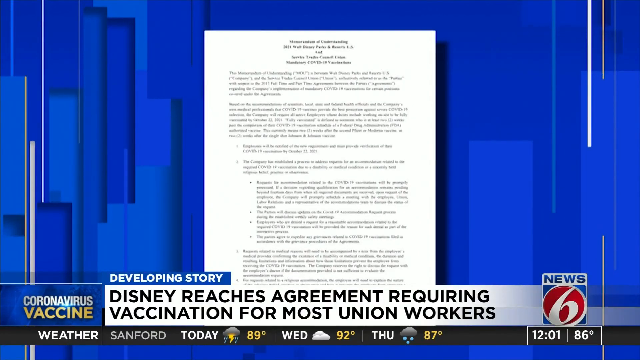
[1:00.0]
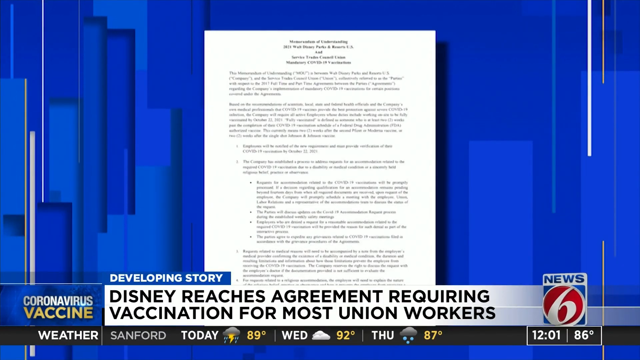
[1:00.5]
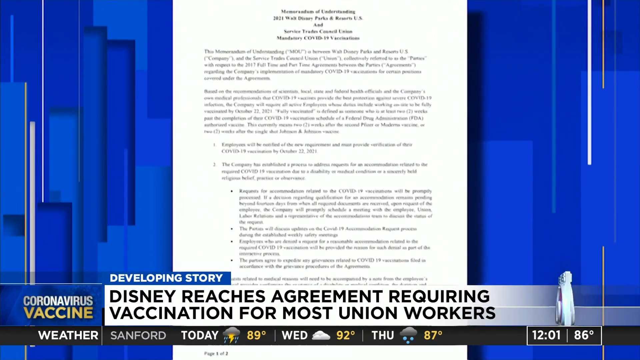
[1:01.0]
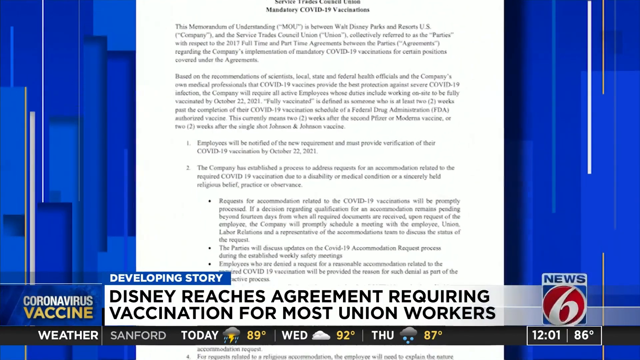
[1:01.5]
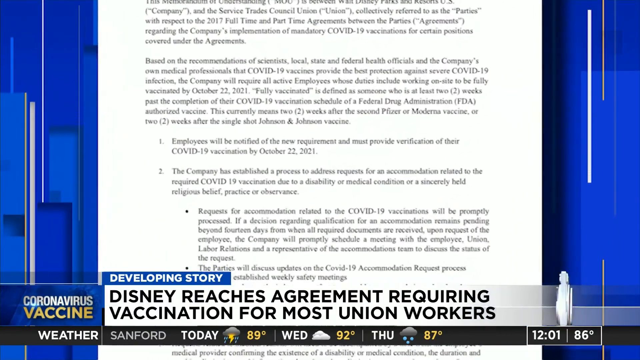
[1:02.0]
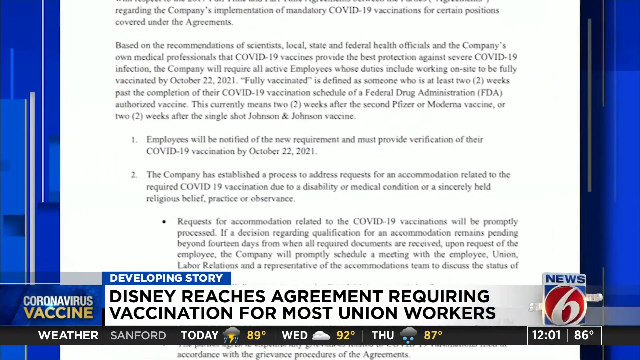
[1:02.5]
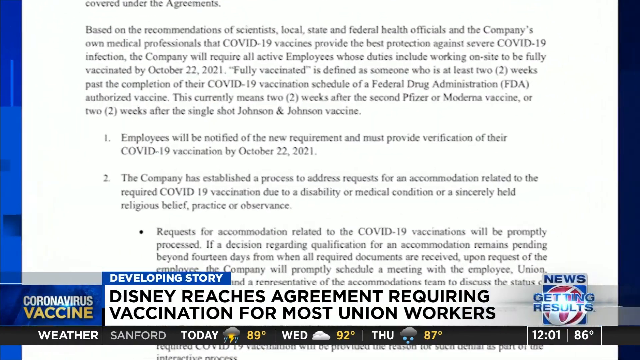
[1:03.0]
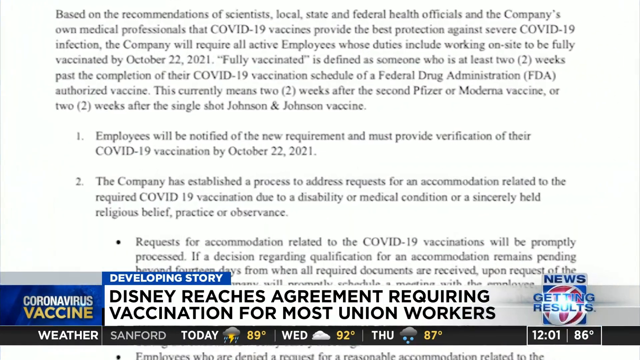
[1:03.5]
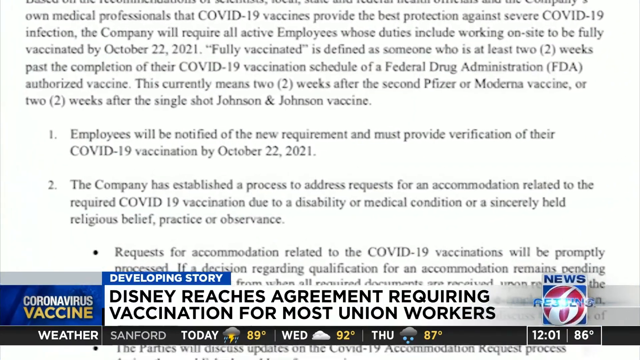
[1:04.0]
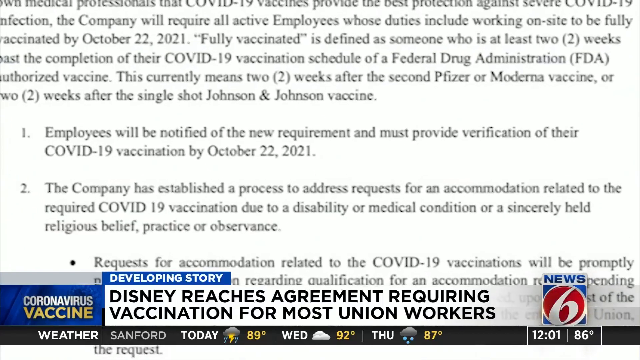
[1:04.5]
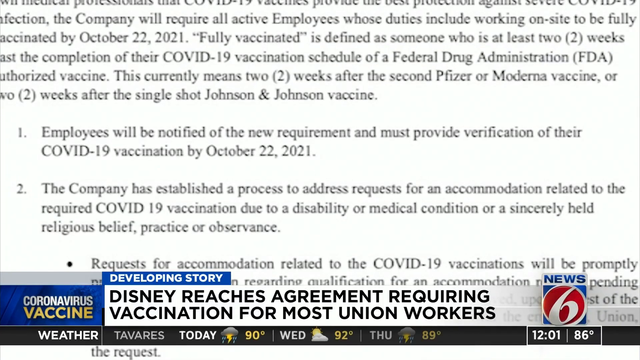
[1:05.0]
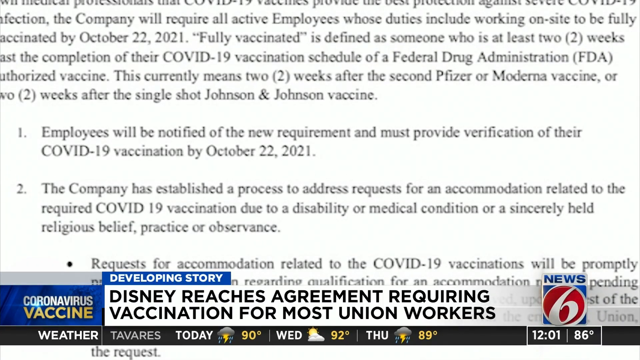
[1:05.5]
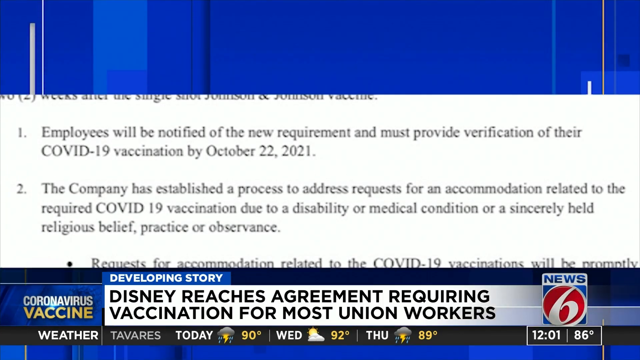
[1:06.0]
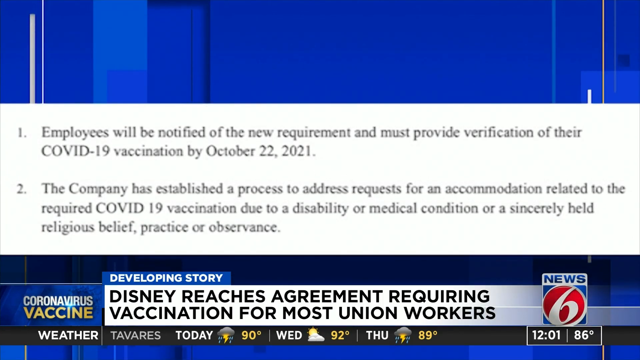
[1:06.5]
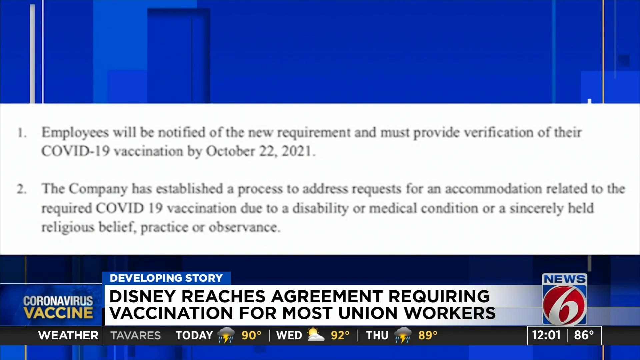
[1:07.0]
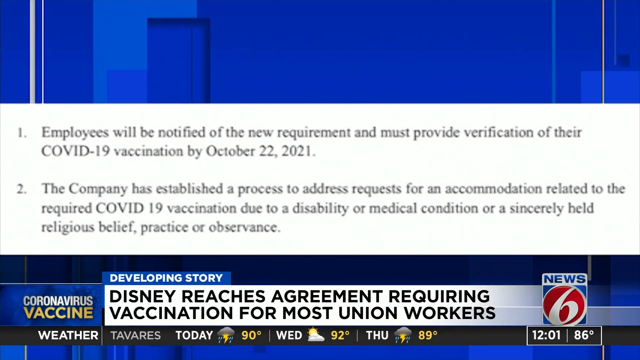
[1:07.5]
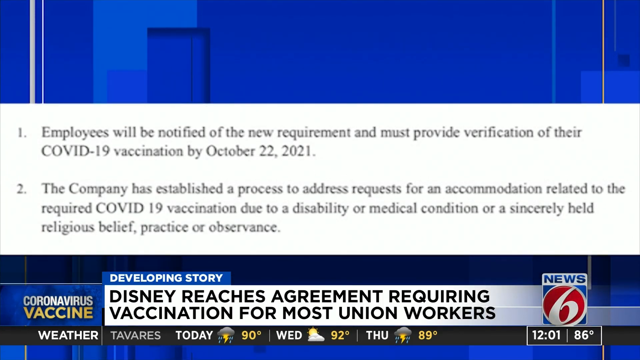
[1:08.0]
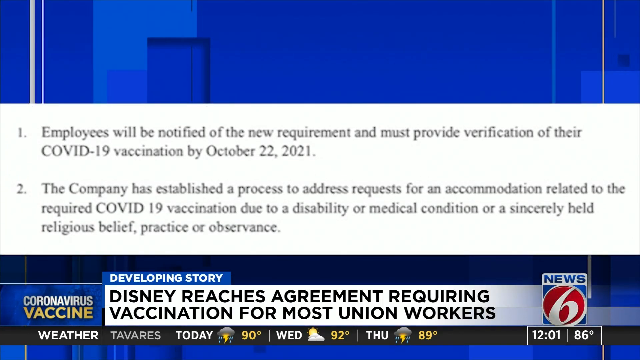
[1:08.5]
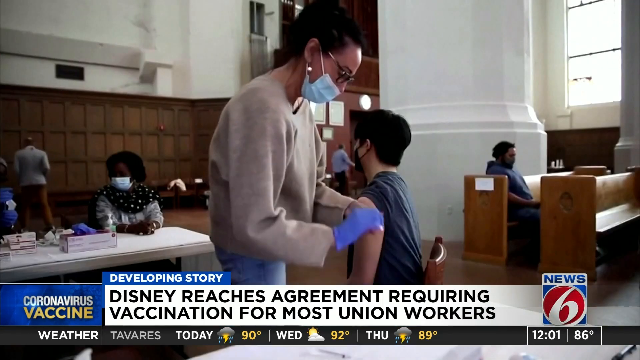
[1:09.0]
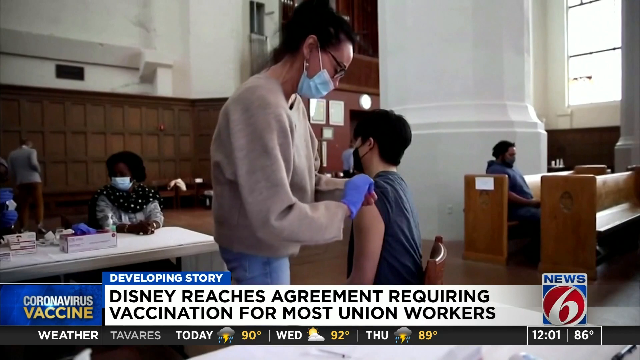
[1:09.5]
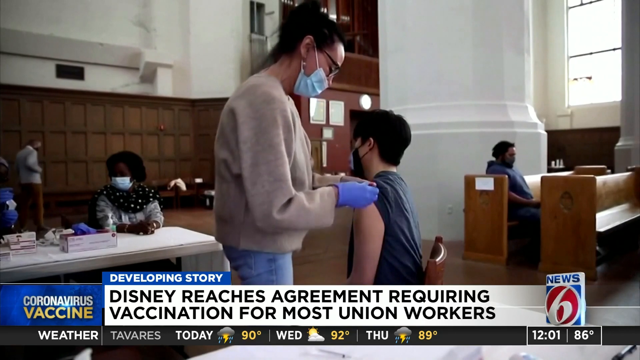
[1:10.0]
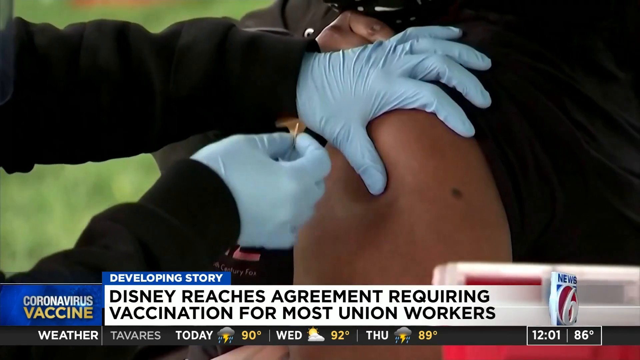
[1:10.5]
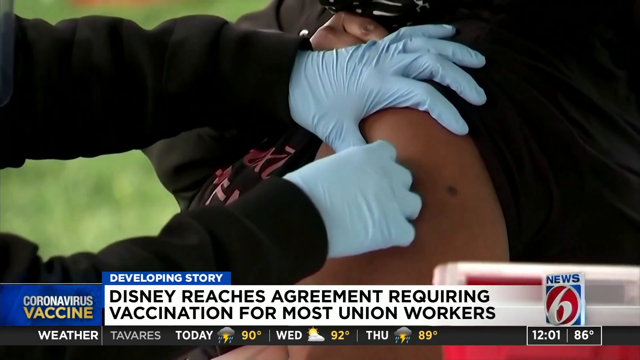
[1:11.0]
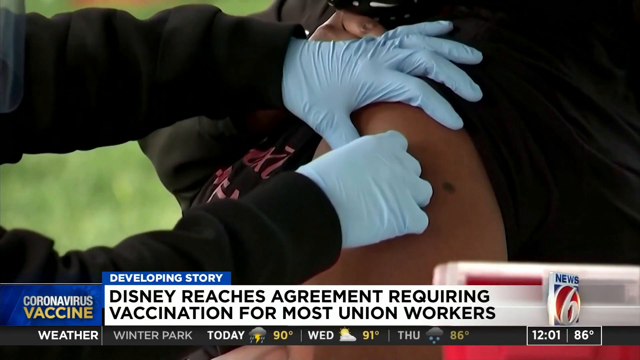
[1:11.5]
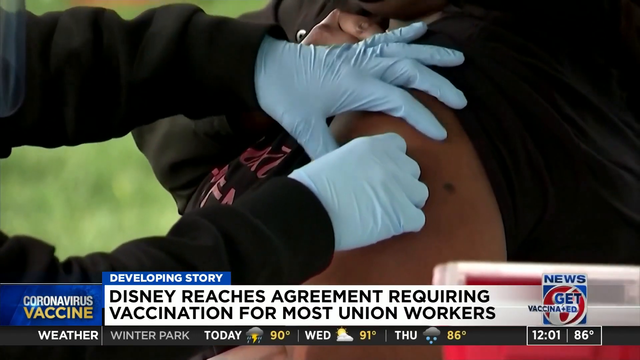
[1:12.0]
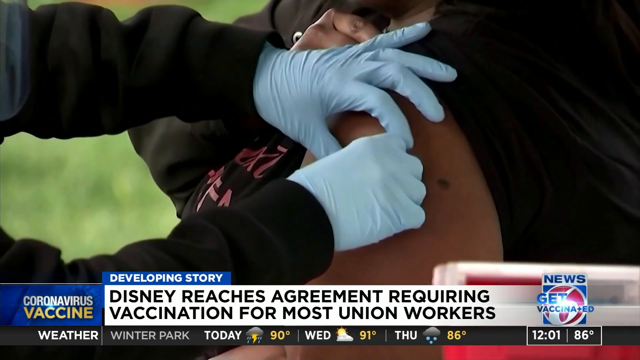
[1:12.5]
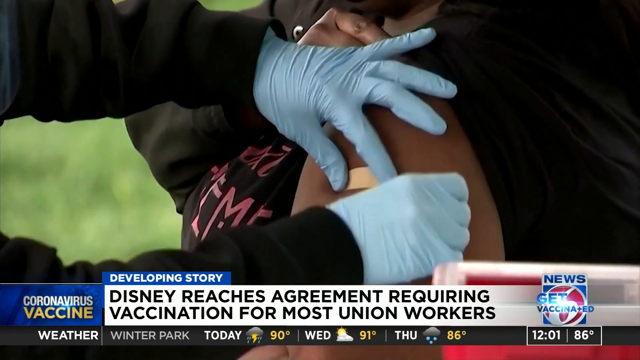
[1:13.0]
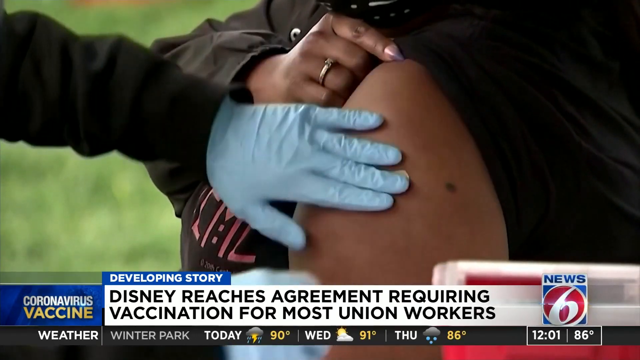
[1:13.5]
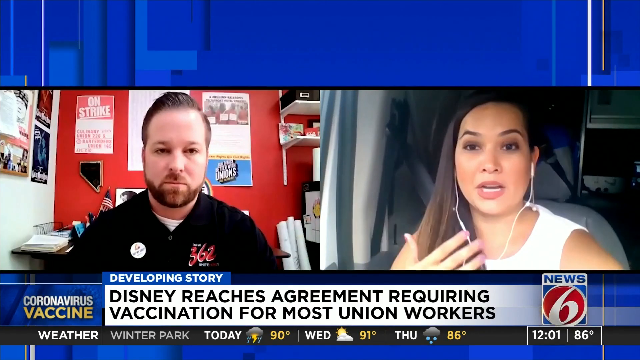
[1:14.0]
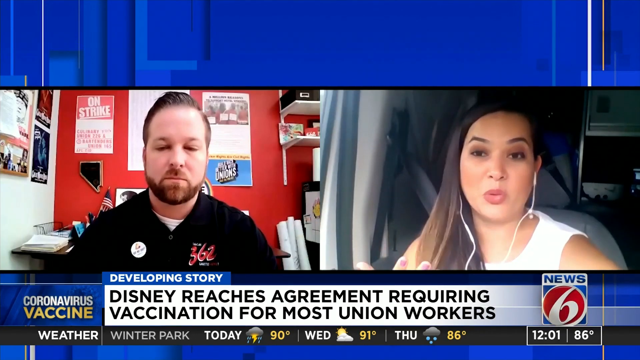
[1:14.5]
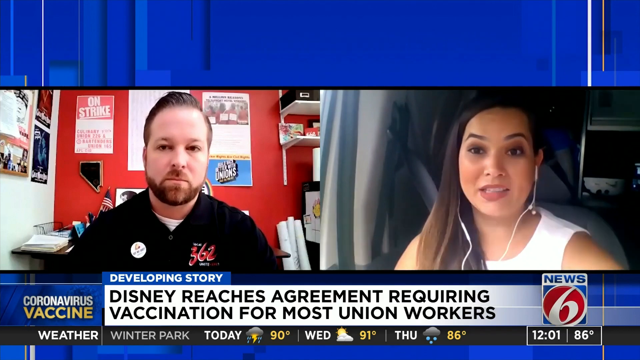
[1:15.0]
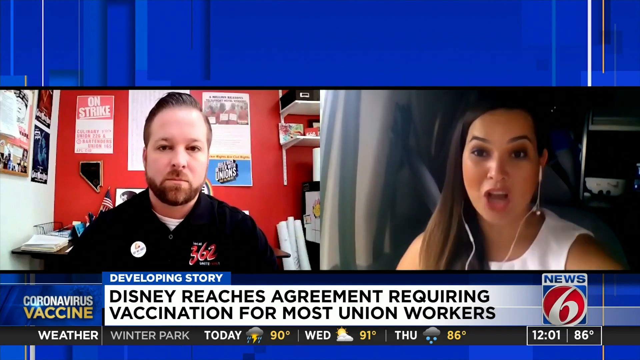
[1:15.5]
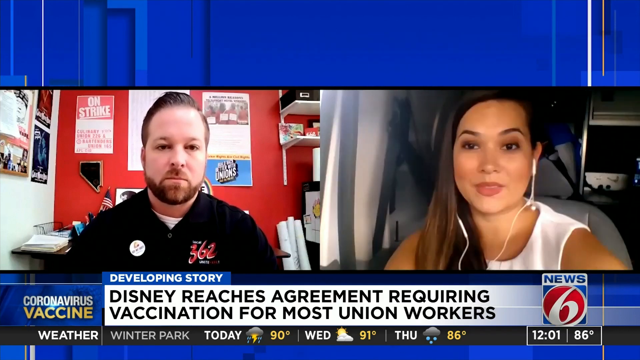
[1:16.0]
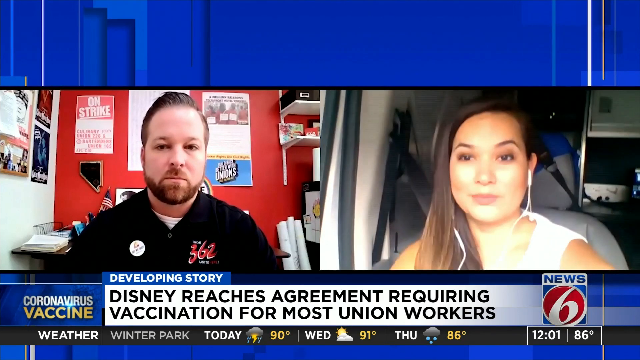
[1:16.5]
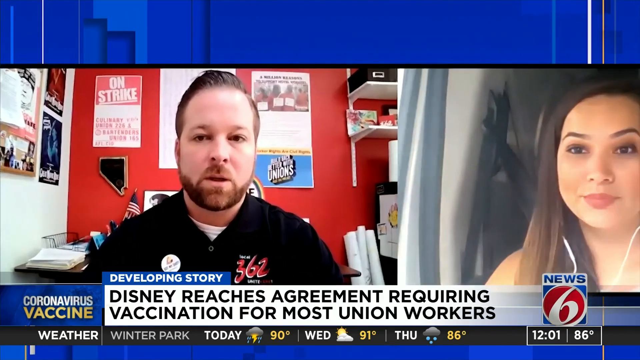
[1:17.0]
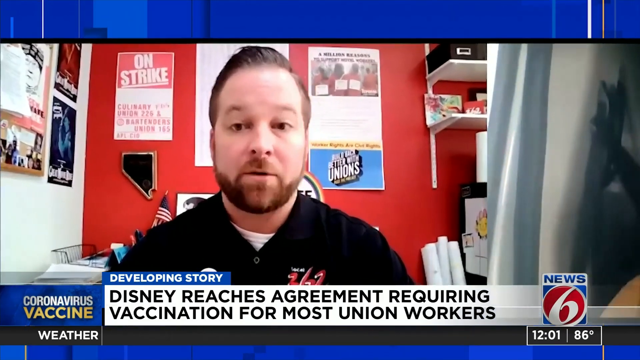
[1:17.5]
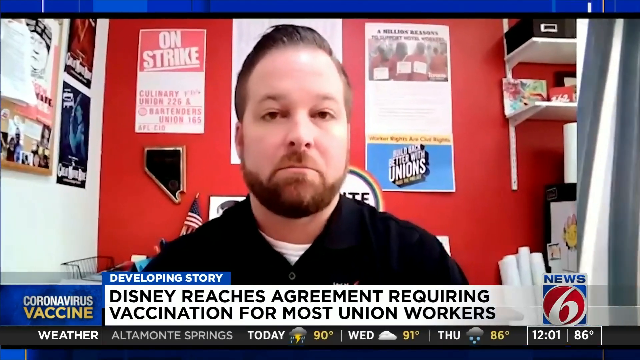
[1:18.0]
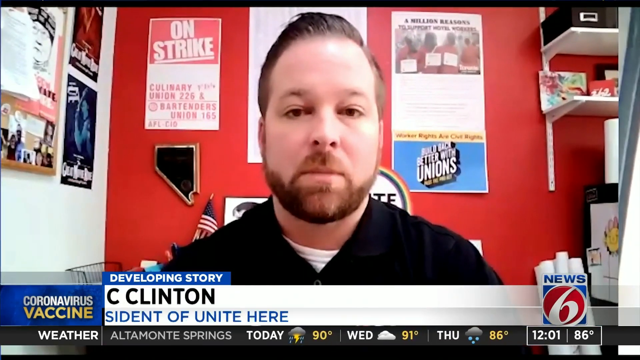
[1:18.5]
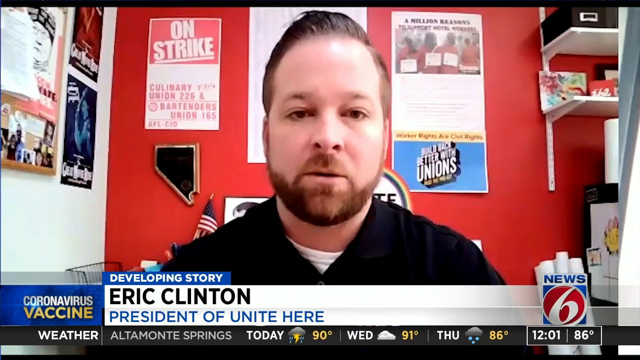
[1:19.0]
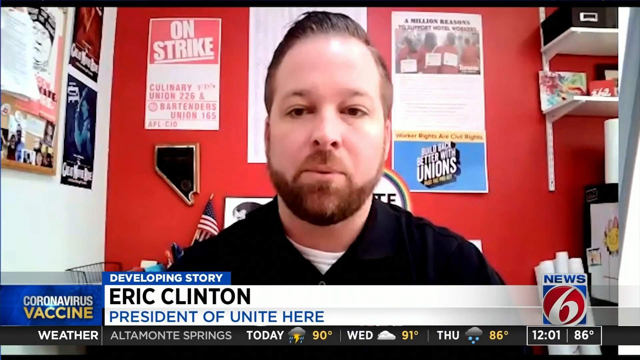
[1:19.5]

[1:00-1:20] Part of the letter is shown. It says employees whose duties include working on sites are to be "fully vaccinated by October 22, 2021," and that fully vaccinated is someone who is at least two weeks past the completion of their vaccines, meaning two weeks after the second Pfizer or Moderna vaccine or two weeks after the single Johnson and Johnson vaccine. It also says employees will be notified of the new requirement and must provide verification of their vaccination by October 22, 2021, and that the company has established a process to address requests for accommodations. The video again shows a vaccine clinic, with different people getting shots and then having band-aids put on. The man in the black shirt is Eric Clinton, president of Unite Here, who is speaking on the topic.